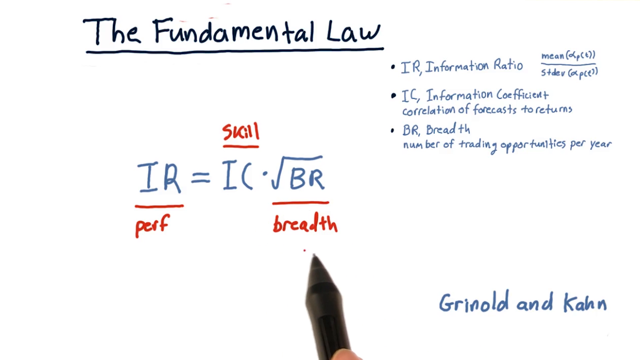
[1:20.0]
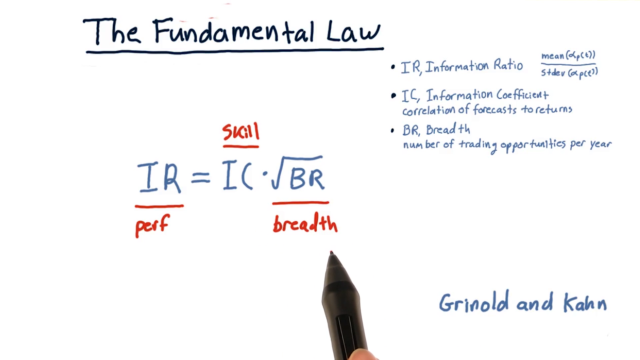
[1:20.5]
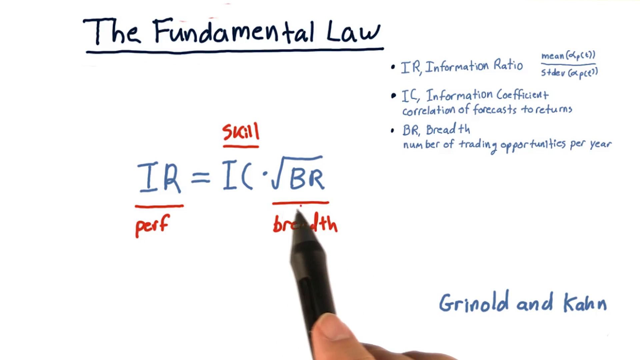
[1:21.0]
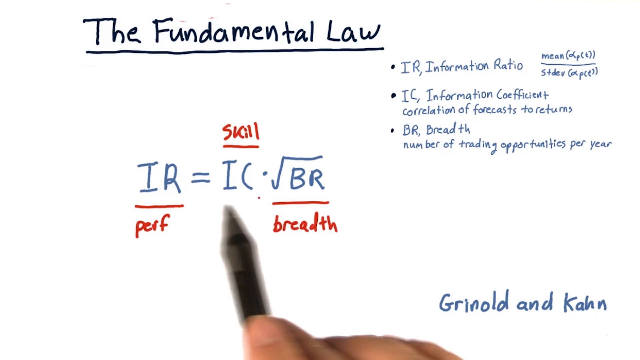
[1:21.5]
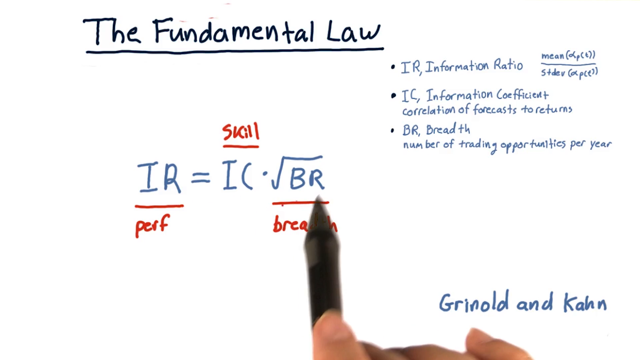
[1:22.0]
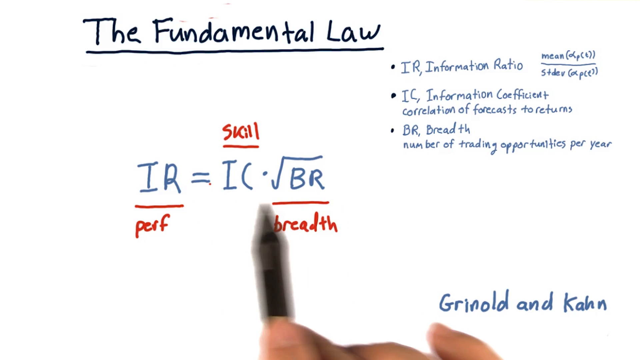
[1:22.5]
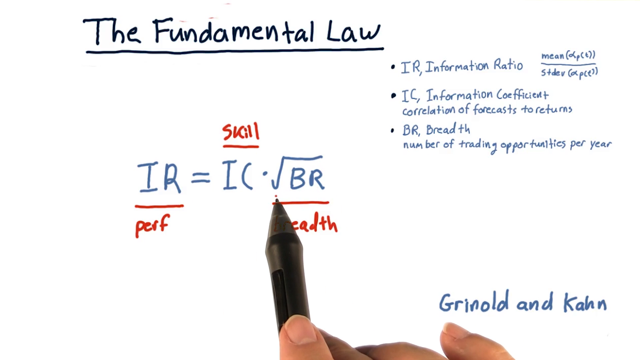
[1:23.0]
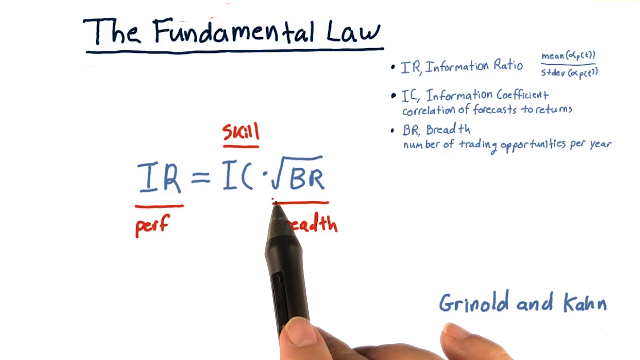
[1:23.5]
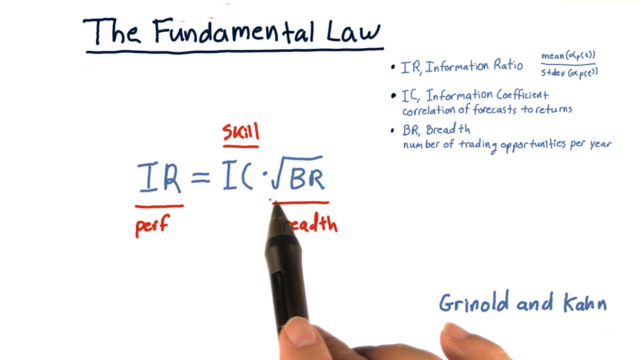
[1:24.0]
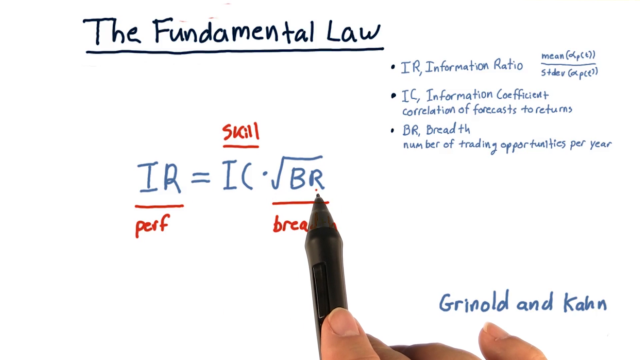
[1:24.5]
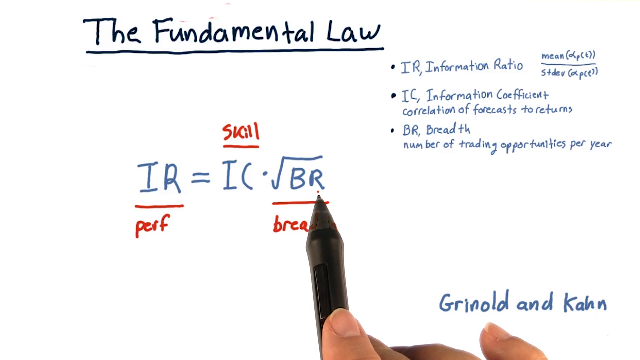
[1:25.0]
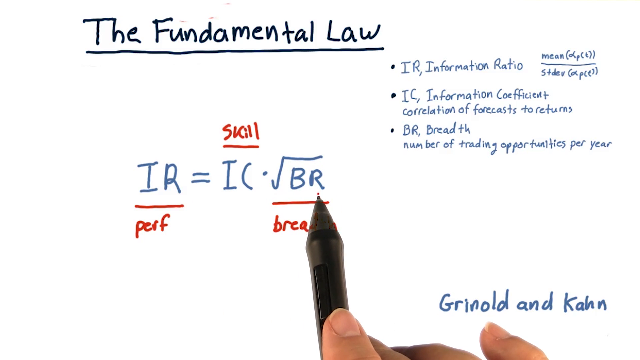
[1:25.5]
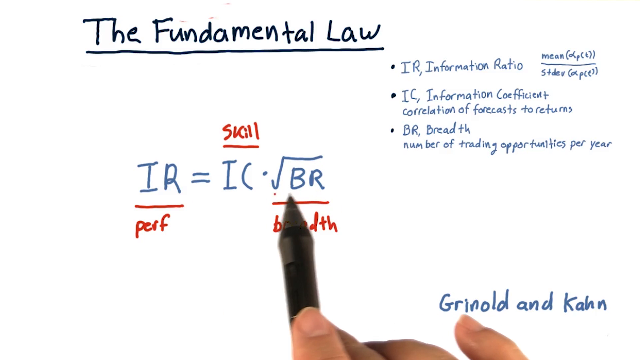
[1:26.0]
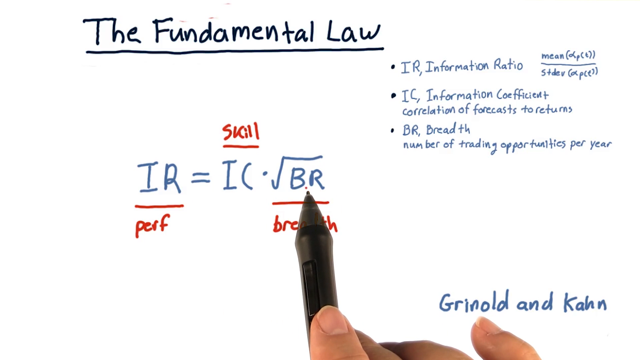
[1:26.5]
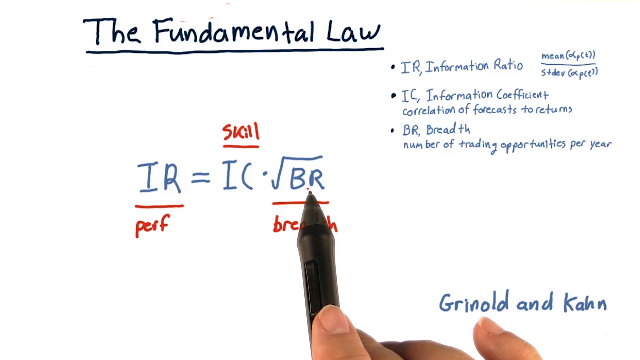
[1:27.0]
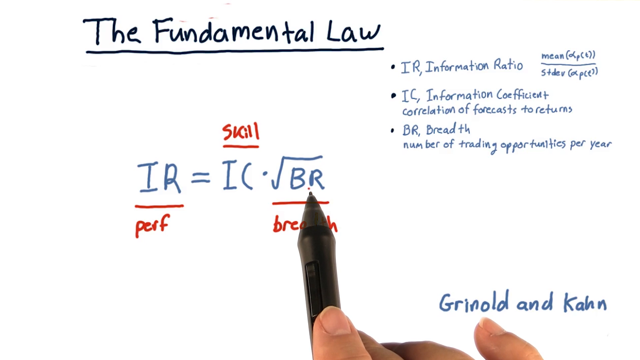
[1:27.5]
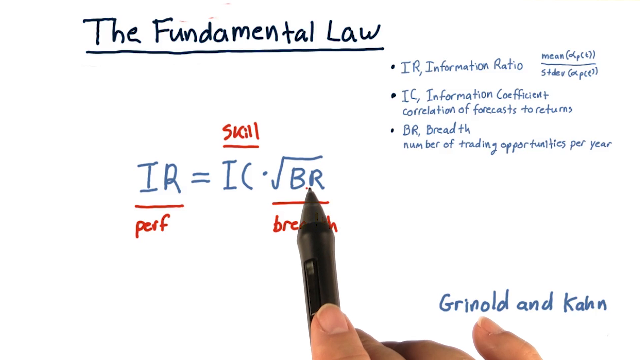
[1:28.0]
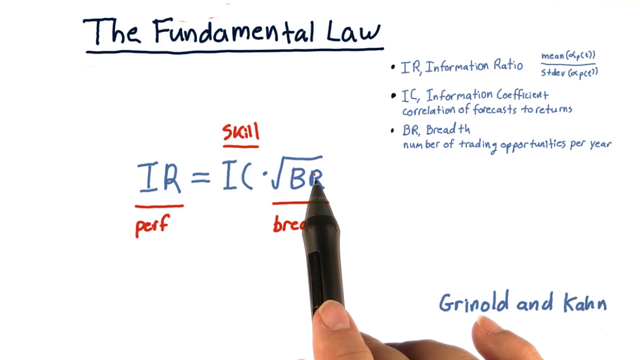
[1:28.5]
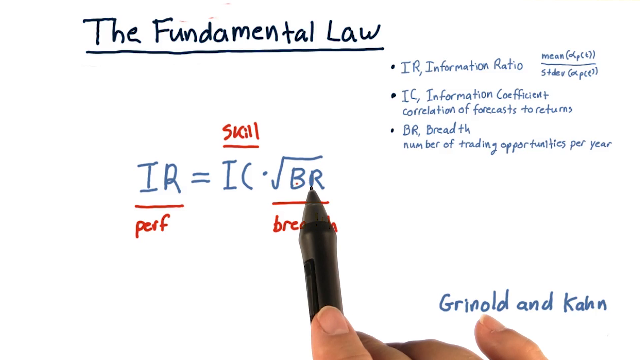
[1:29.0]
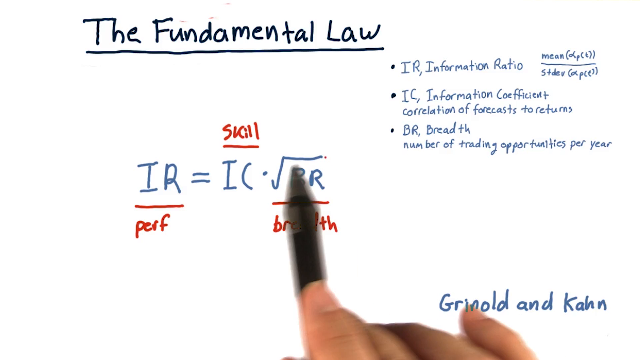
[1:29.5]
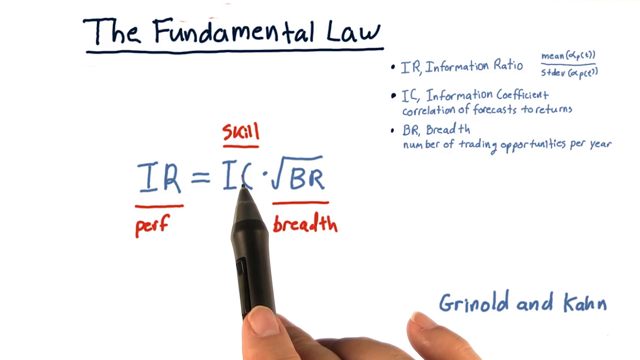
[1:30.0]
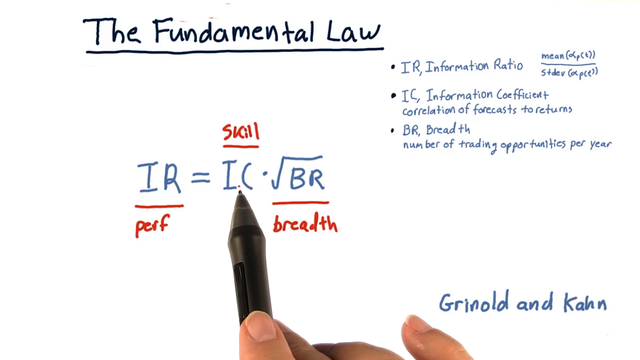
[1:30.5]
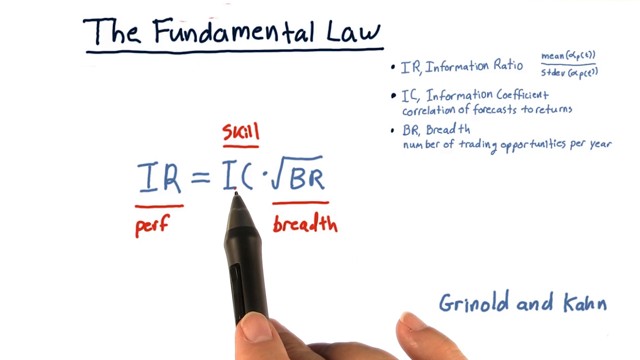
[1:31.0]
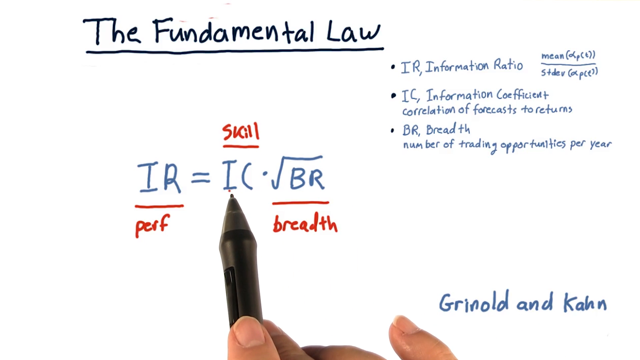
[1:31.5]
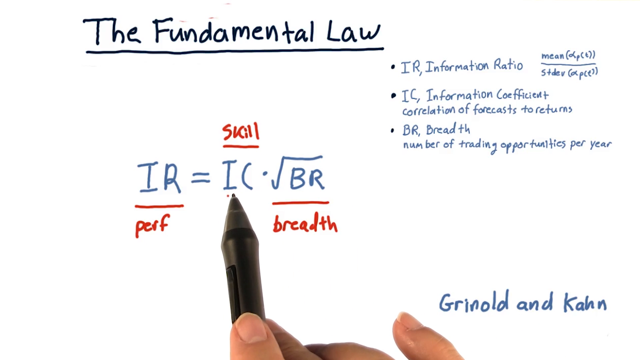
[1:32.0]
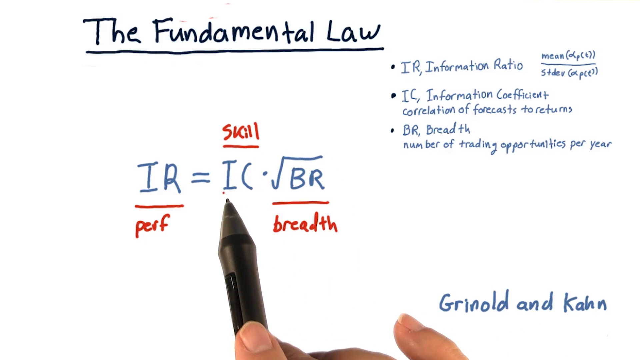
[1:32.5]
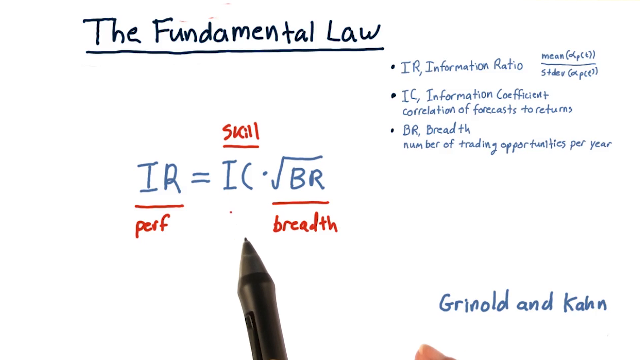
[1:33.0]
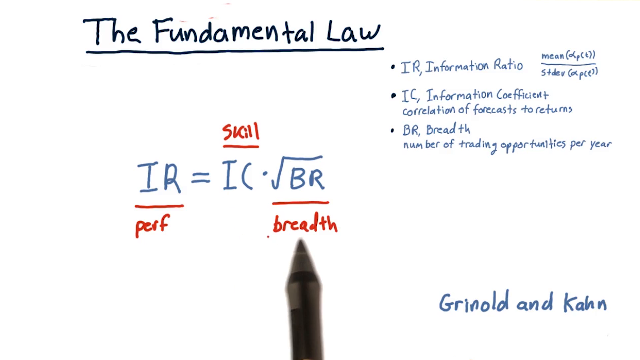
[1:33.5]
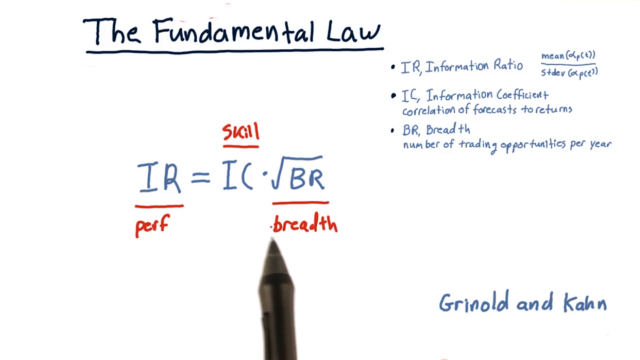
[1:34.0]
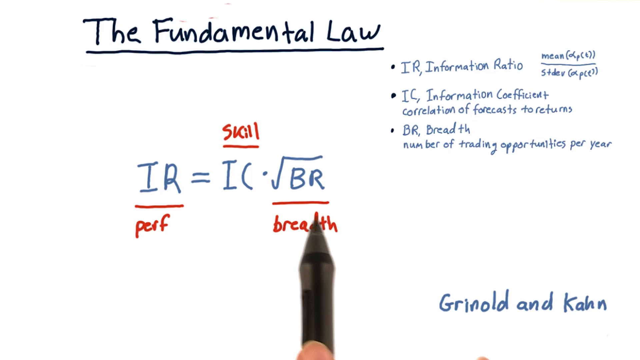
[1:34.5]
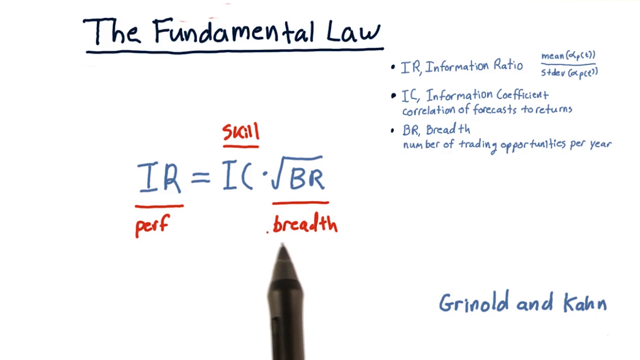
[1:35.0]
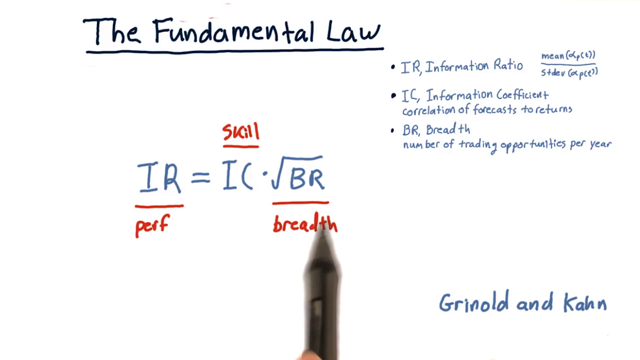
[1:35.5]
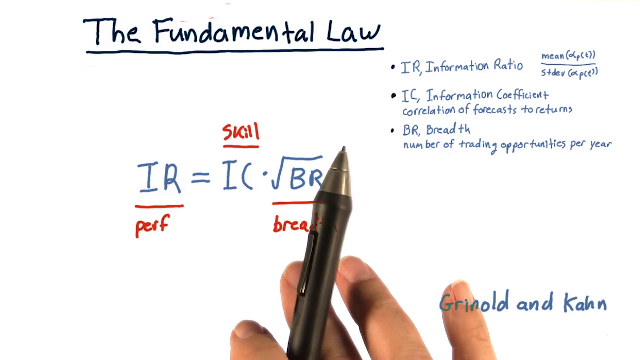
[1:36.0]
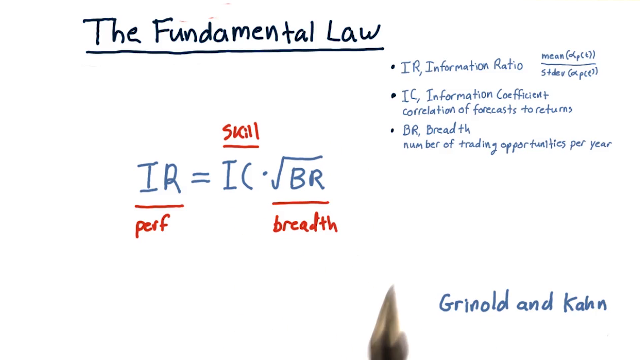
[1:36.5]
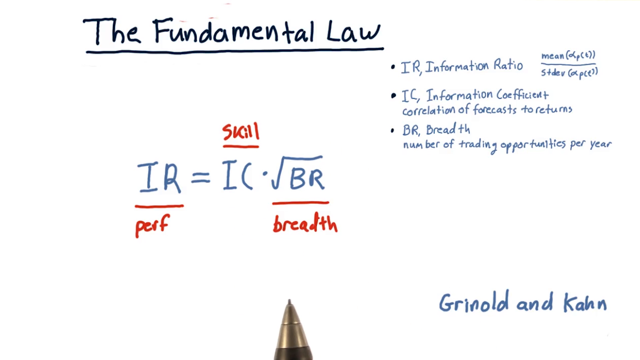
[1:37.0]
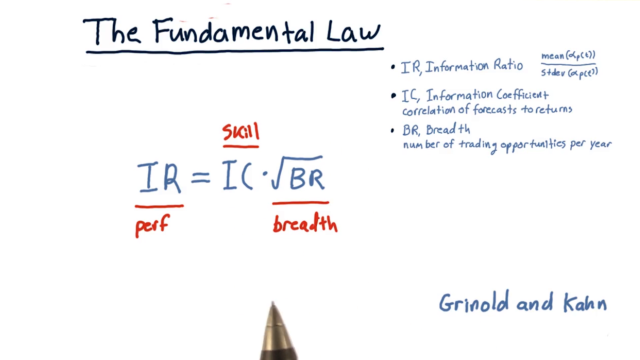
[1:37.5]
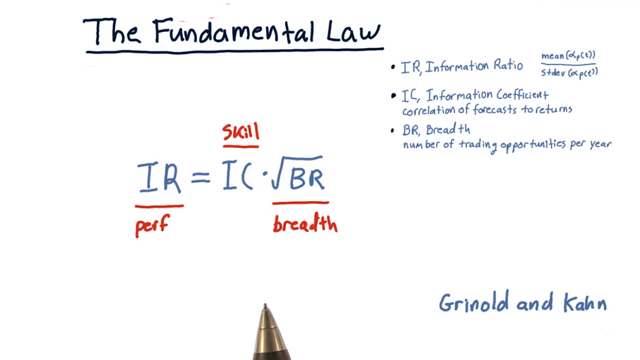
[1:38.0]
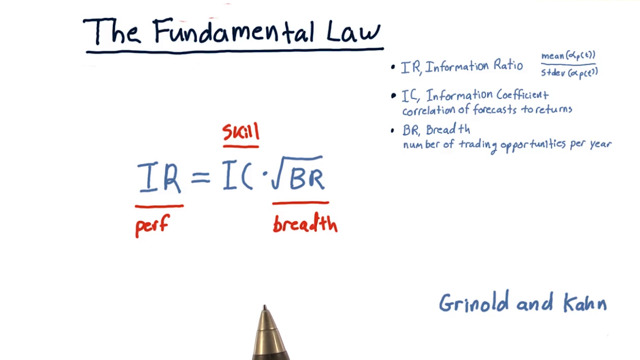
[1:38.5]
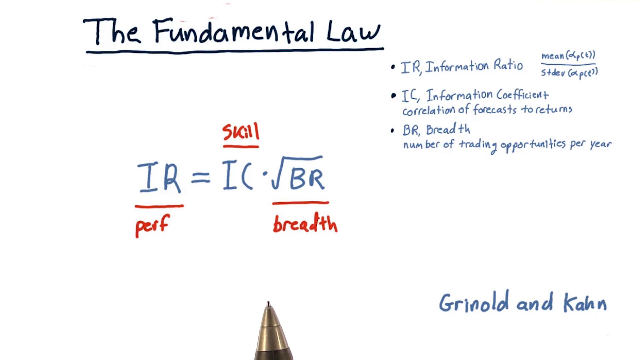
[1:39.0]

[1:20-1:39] The handwritten information is about the fundamental law and is written in black, red and blue pen. It continues with IR divided by a term and equal to IC and BR. IR is the information ratio, with mean in brackets; the end of that line cannot be seen. IC is the information coefficient, correlation of forecast with returns, and BR is defined as the number of reading opportunities per year. Grunold and Kahn are credited as the writers of the information. The writing is on a piece of paper or a board.